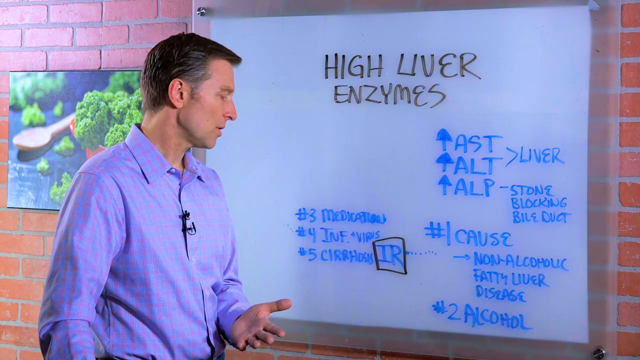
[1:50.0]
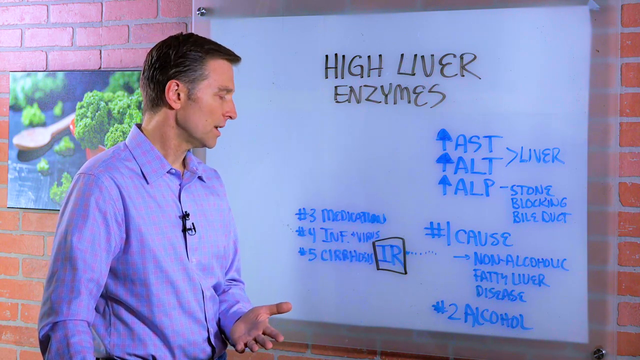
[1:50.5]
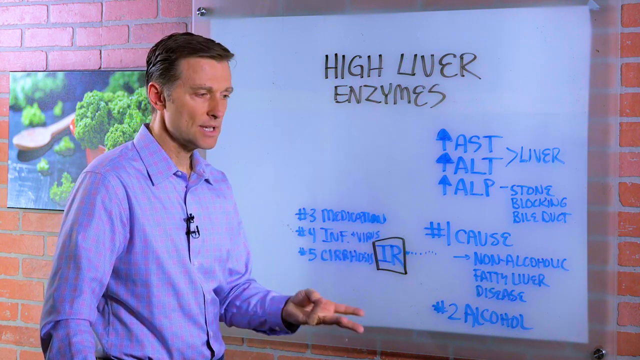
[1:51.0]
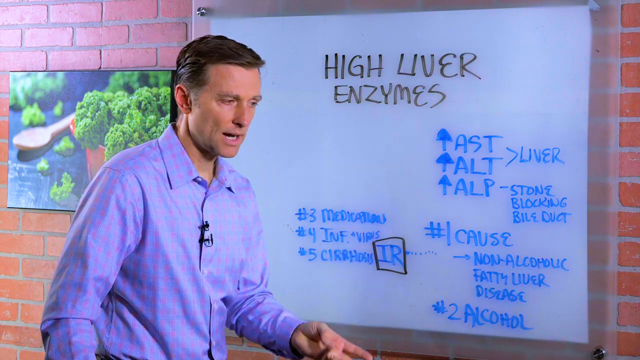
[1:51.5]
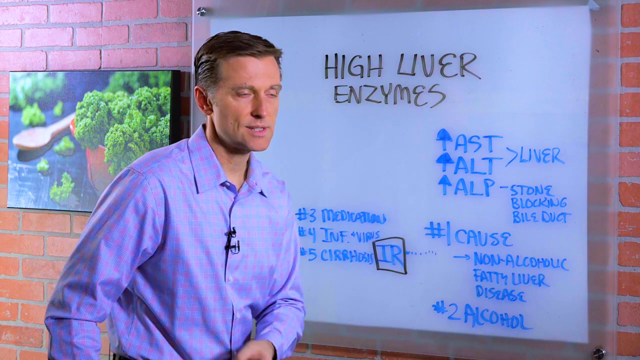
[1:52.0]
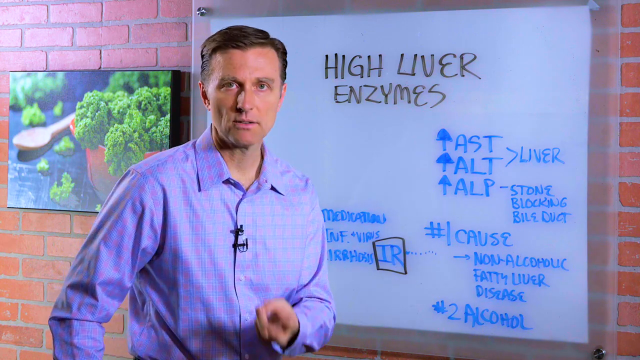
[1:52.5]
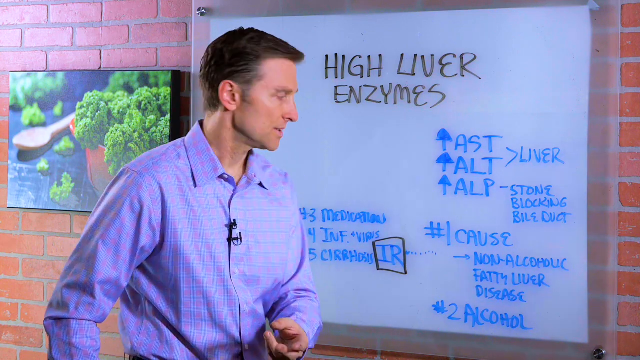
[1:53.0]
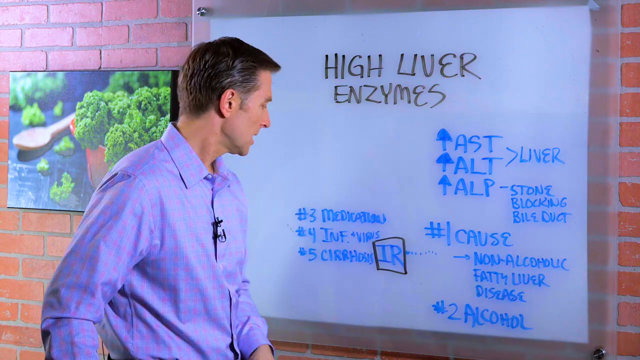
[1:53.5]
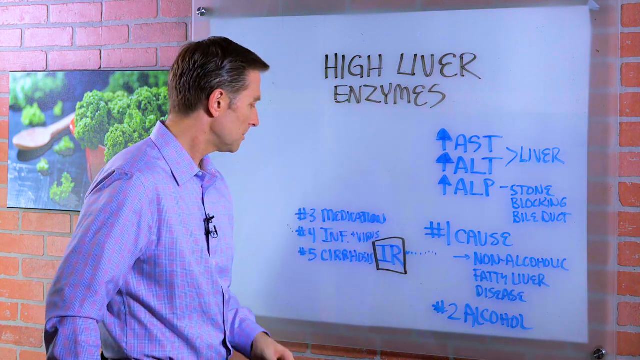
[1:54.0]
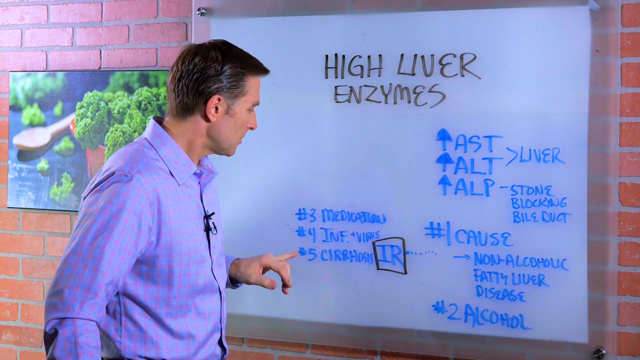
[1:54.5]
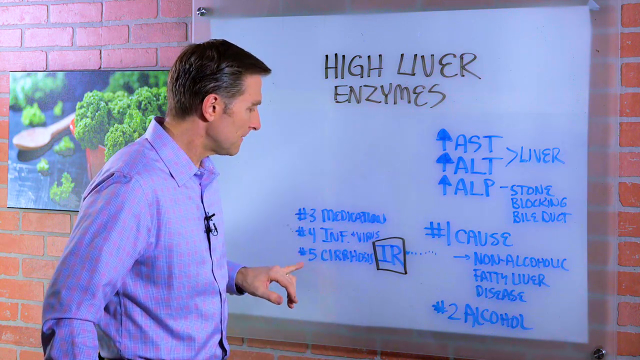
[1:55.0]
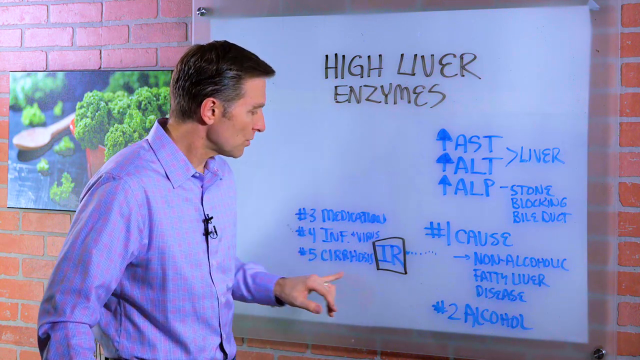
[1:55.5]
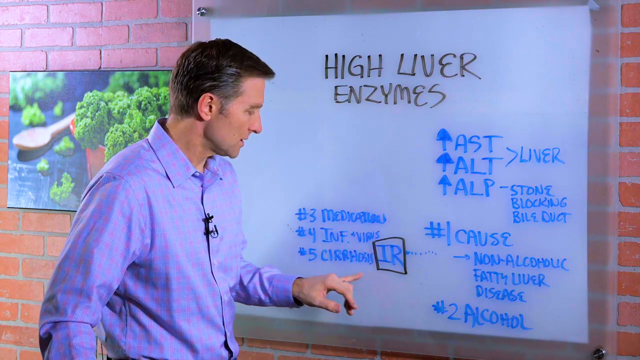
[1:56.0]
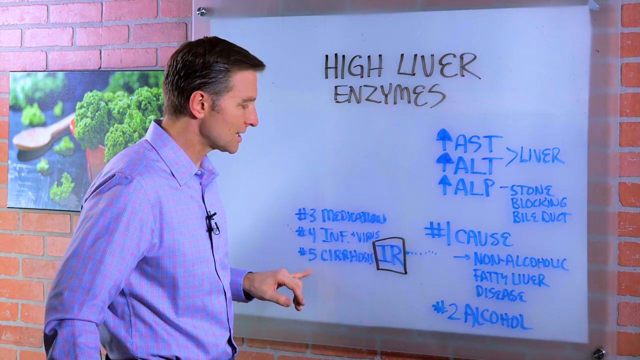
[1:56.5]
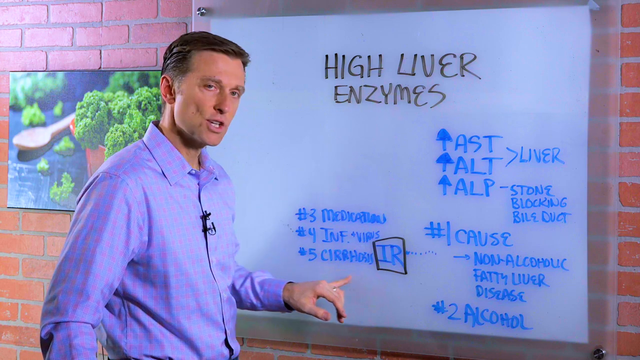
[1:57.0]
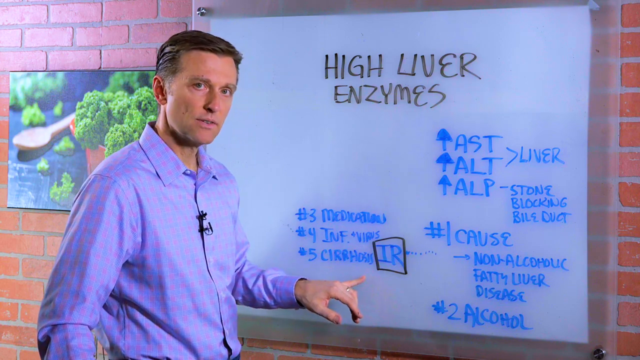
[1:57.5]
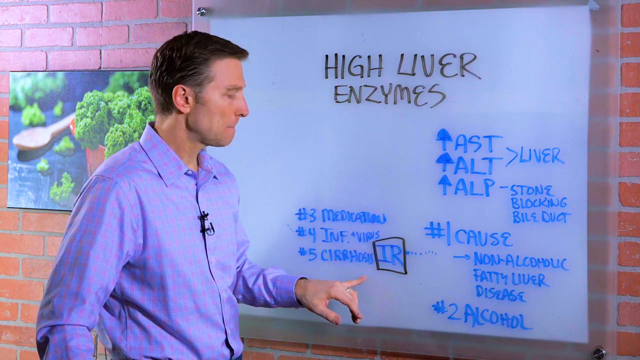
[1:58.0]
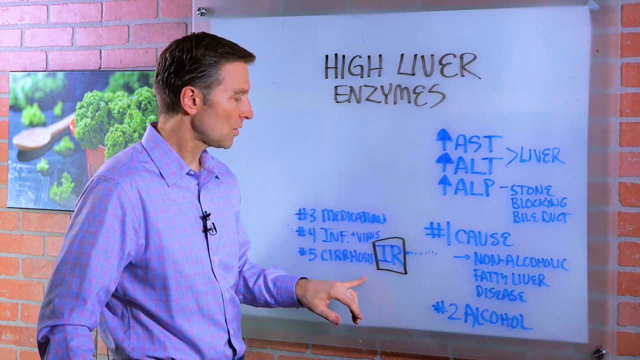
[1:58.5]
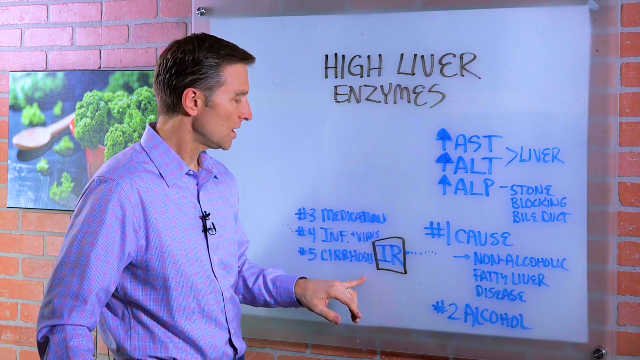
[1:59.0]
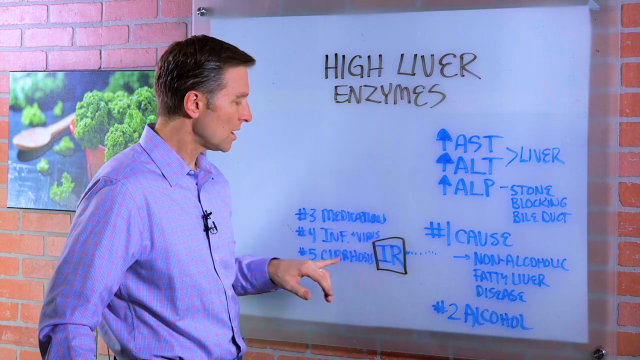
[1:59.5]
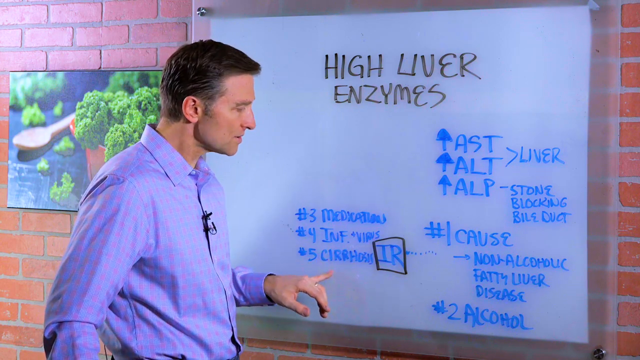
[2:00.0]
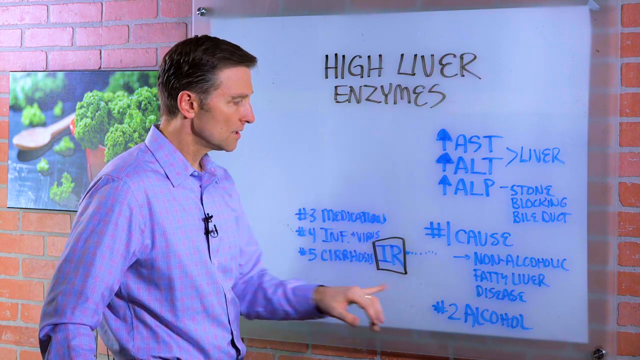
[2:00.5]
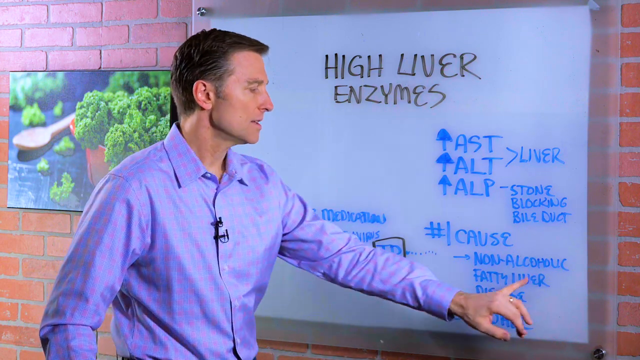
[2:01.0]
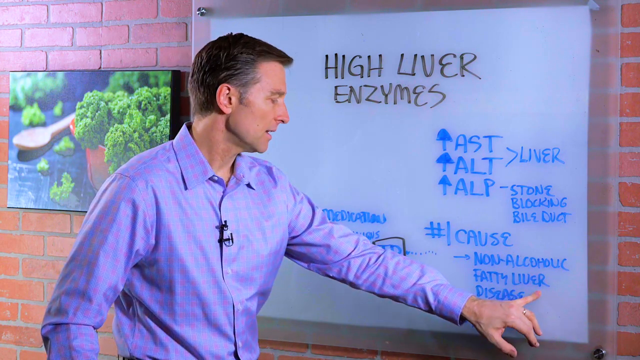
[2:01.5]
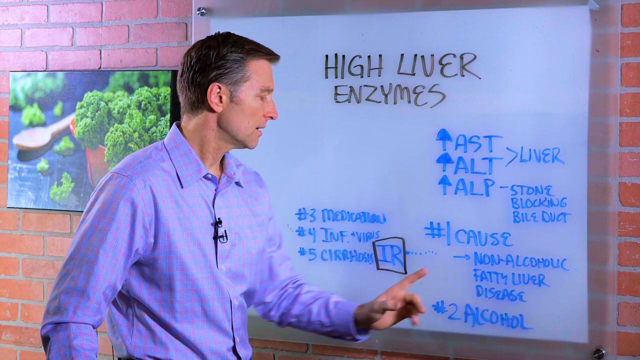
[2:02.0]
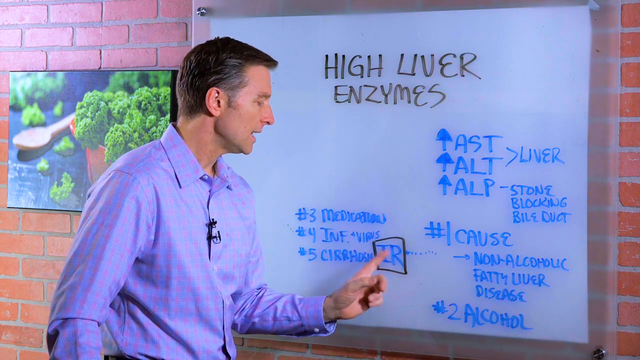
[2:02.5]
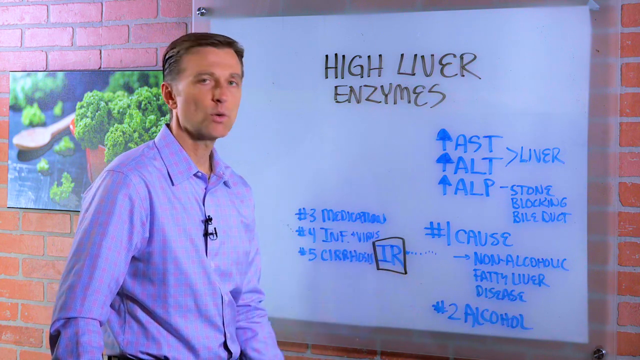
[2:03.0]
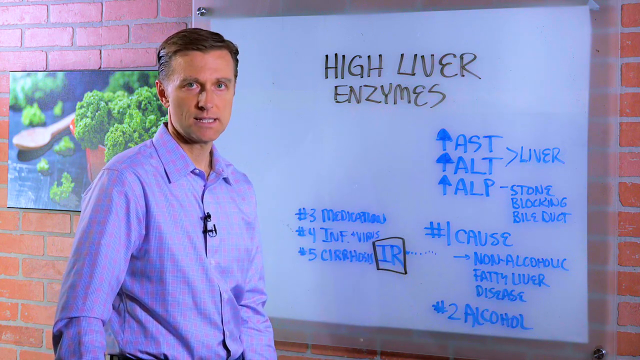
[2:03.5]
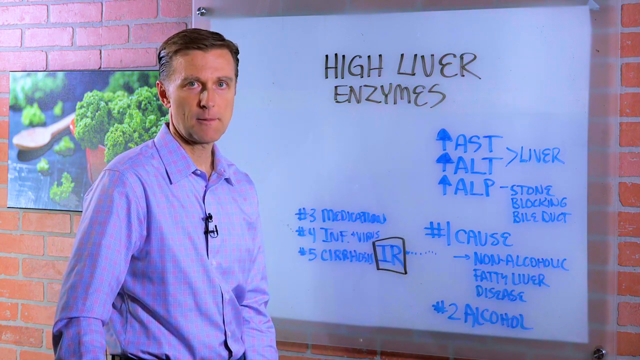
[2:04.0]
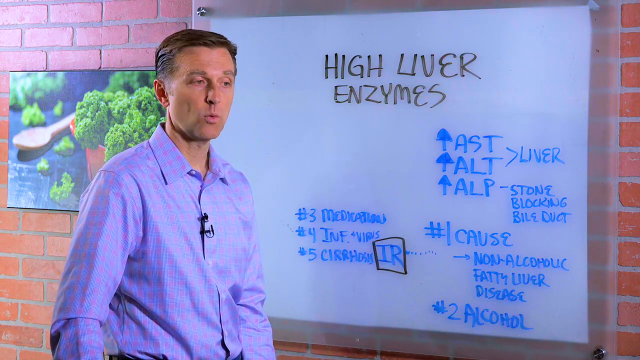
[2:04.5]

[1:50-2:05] Looking at the whiteboard, the man points to "number 5 cirrhosis," next to the square he made around "IR." He points to "fatty liver" and back to "IR," puts his fingers together, and repeats the sequence of cirrhosis, fatty liver and IR several times, once using his small finger. He looks back at the camera, looks up at "high liver enzymes," and makes a motion with his fingers. He makes the number 3 with his fingers more than once, looks at the board, and looks up.